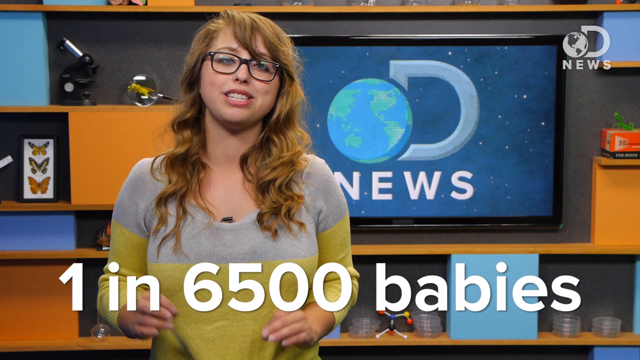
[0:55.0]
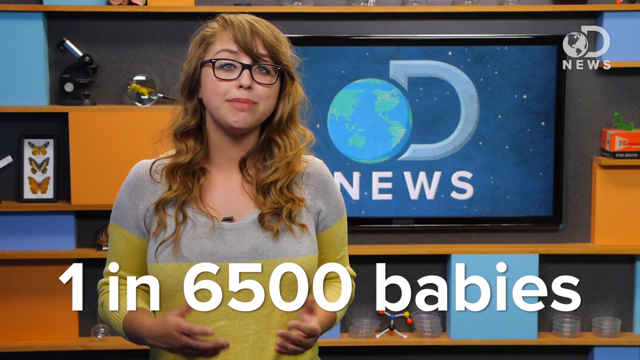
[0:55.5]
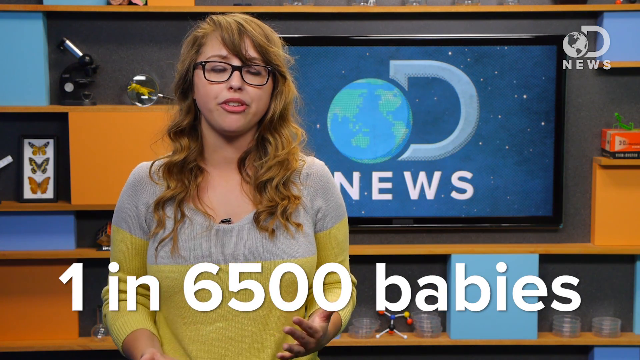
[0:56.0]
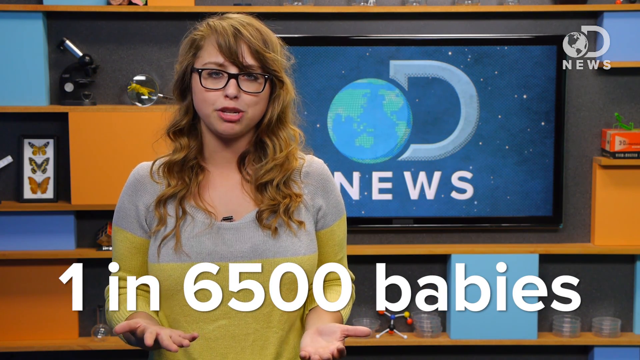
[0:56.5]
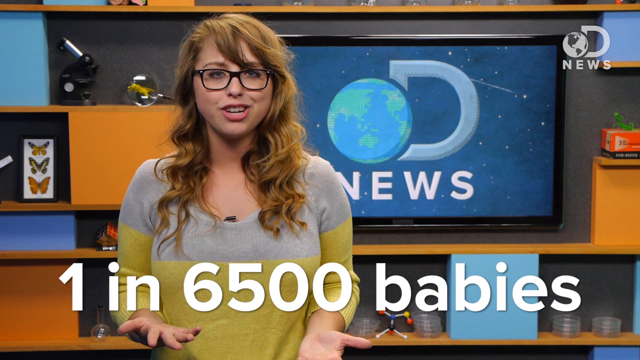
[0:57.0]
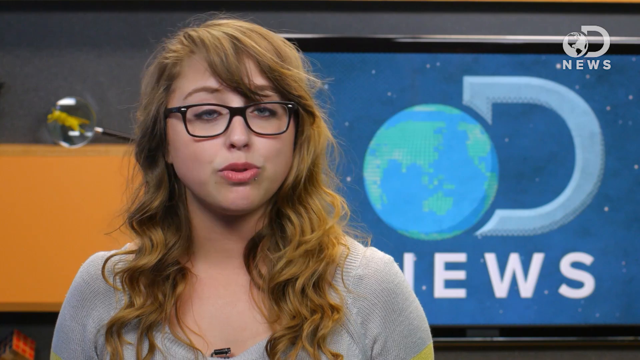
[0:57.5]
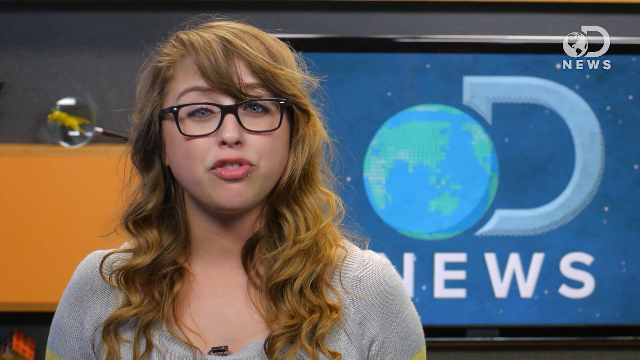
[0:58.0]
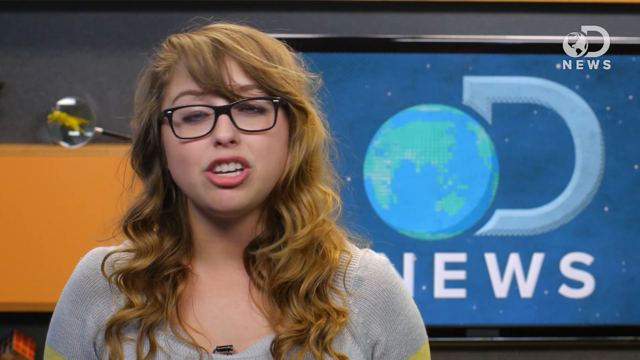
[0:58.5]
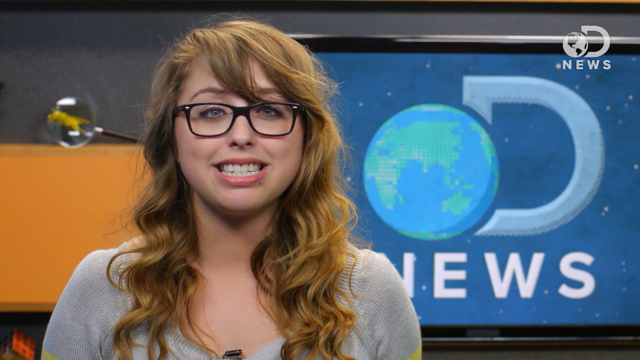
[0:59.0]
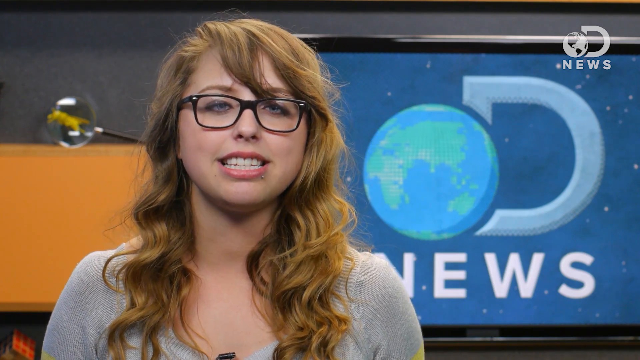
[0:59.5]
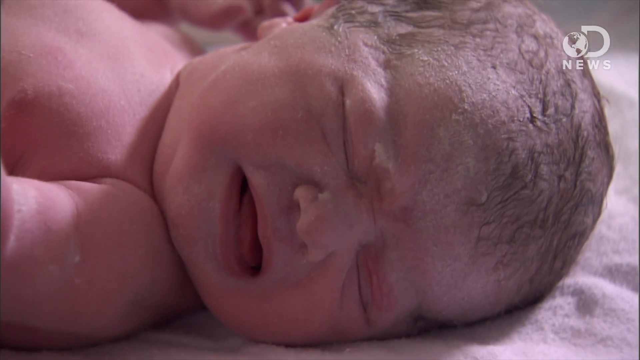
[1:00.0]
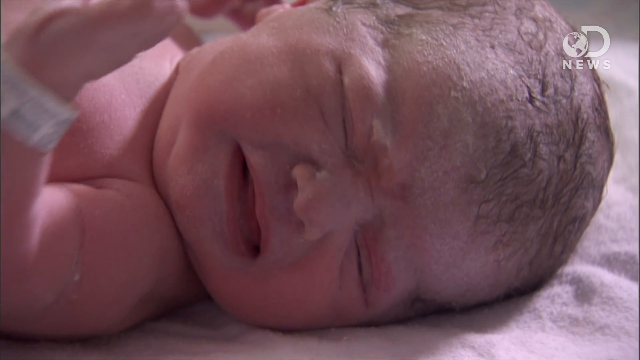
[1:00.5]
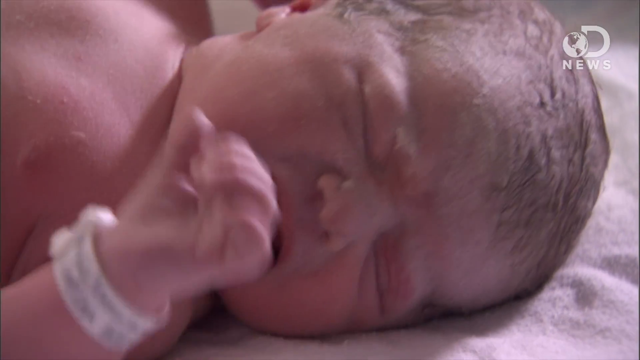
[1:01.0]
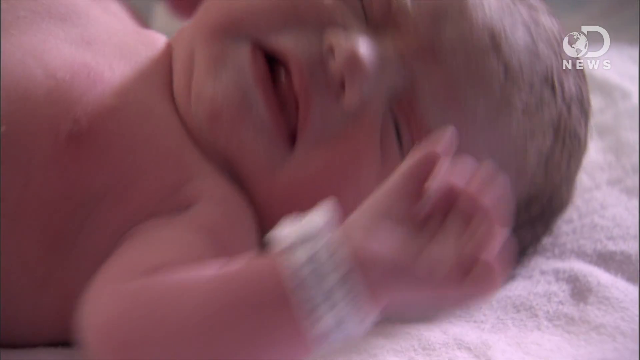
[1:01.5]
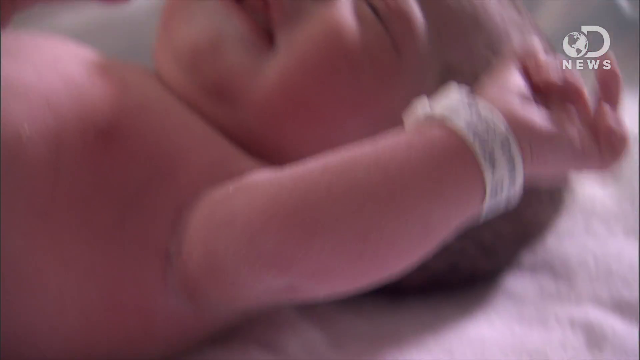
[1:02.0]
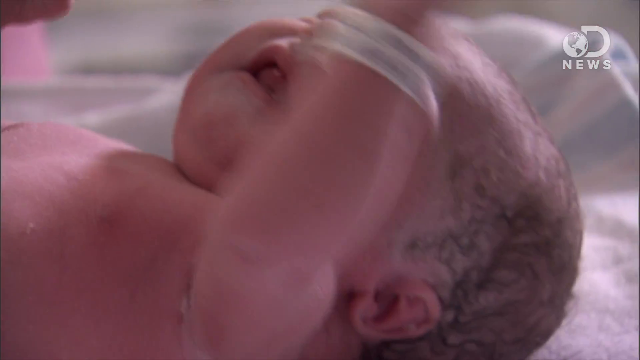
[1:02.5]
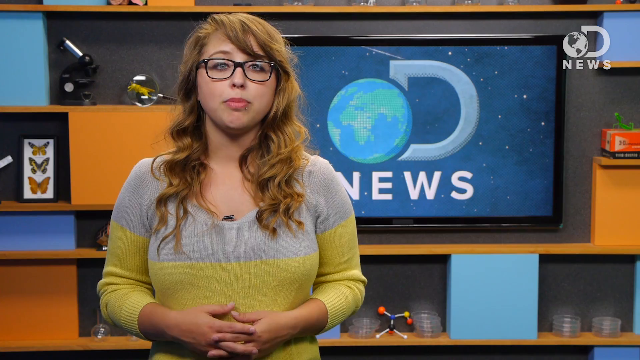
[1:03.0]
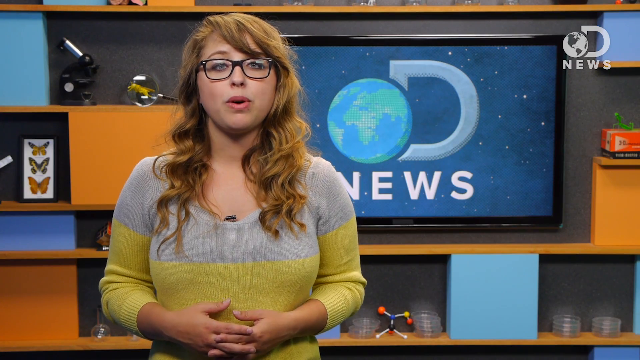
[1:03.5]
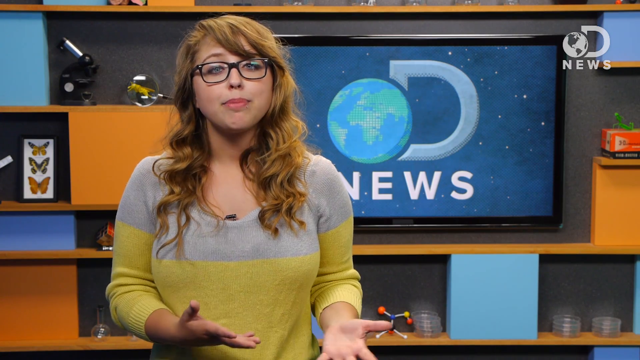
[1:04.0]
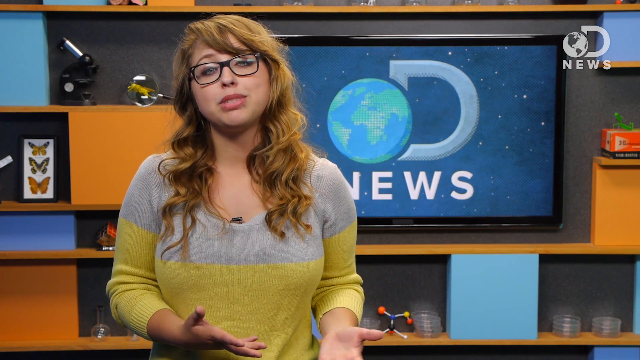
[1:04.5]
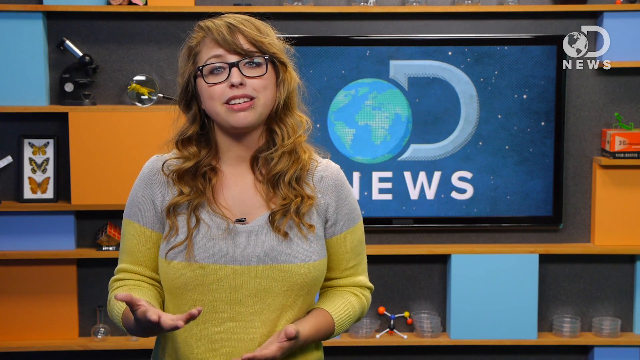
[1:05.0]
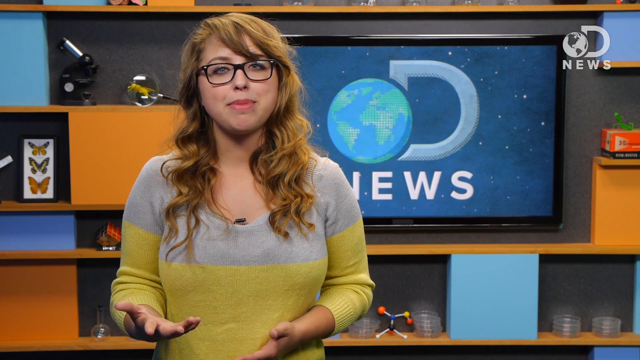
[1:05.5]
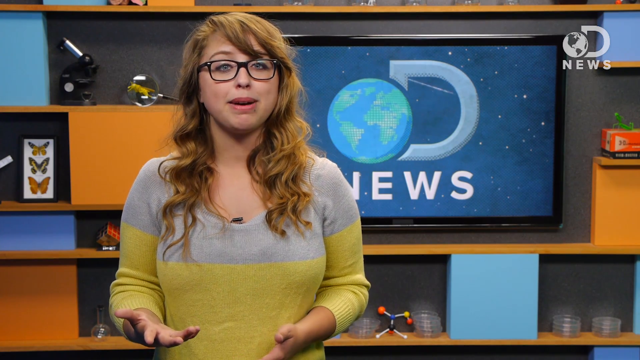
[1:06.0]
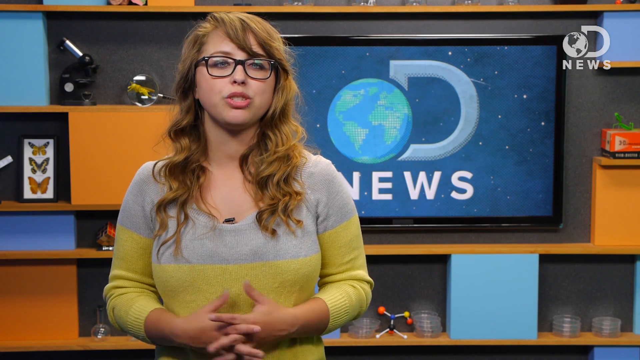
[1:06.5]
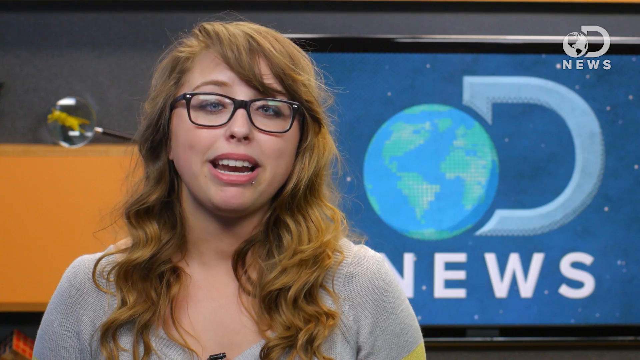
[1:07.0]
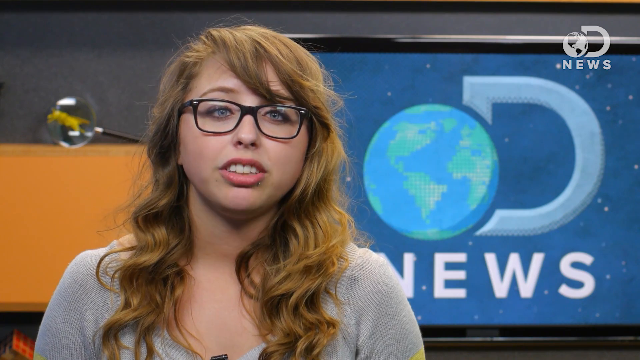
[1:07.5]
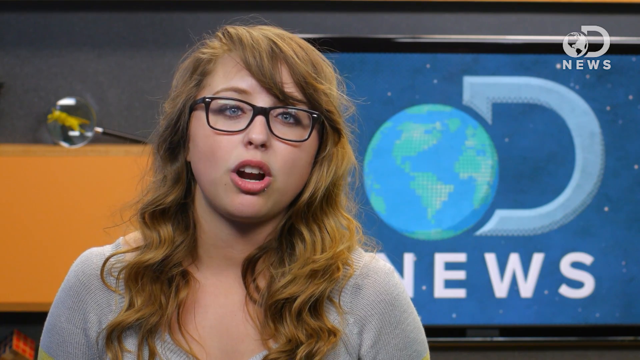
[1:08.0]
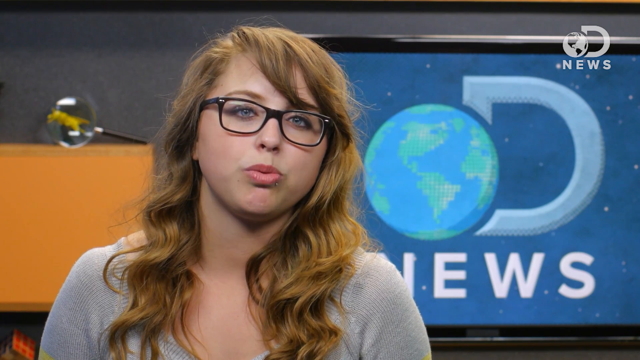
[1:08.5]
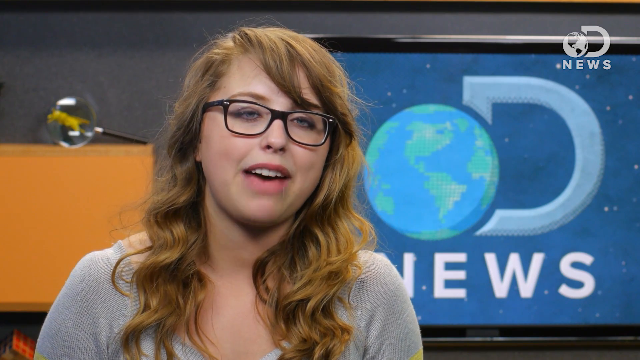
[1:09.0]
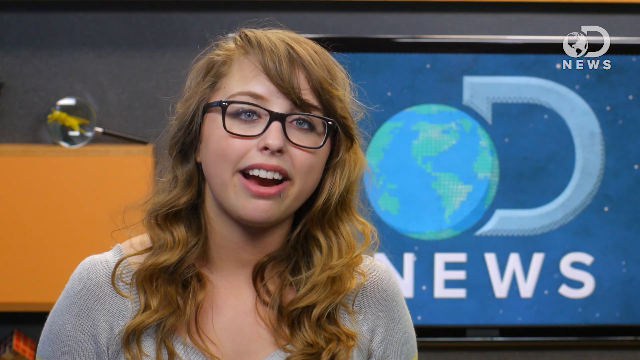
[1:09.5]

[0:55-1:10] The words "1 in 6,500 babies" are on the screen at the bottom in white while the reporter talks. Close shots and wide shots show her talking in front of the OD News logo. The camera then pans from her to a newborn baby lying down and crying; the baby is in the hospital, with a white name band around its arm. The camera pans back to the reporter, who continues to talk expressively with her hands.